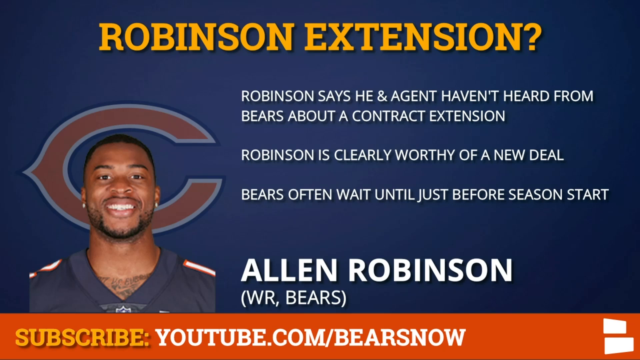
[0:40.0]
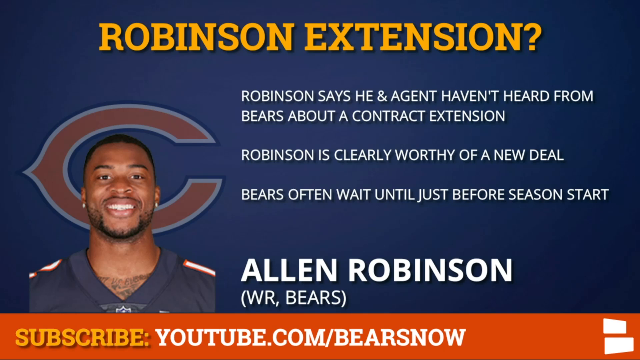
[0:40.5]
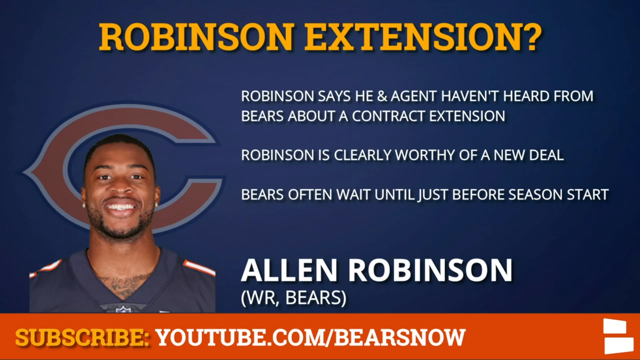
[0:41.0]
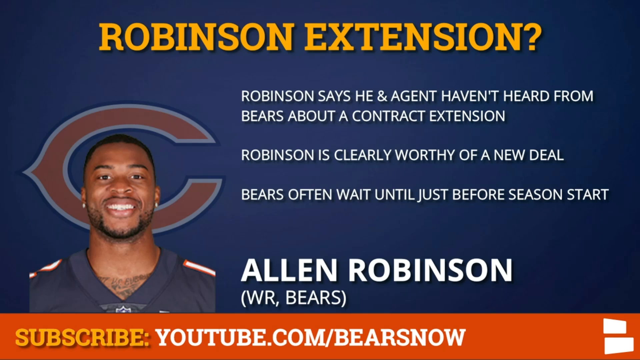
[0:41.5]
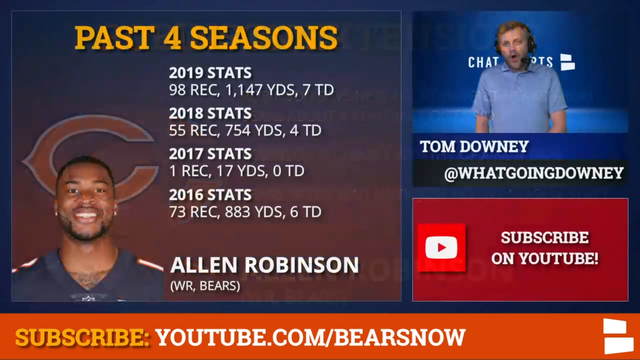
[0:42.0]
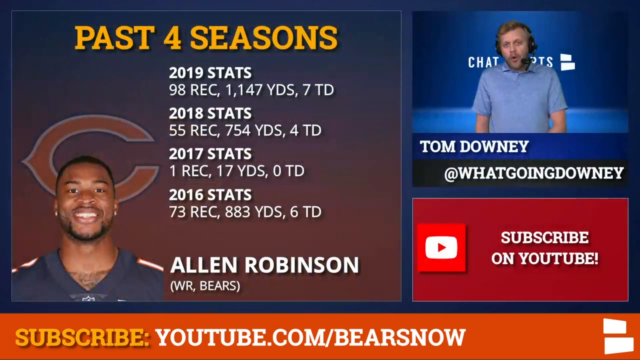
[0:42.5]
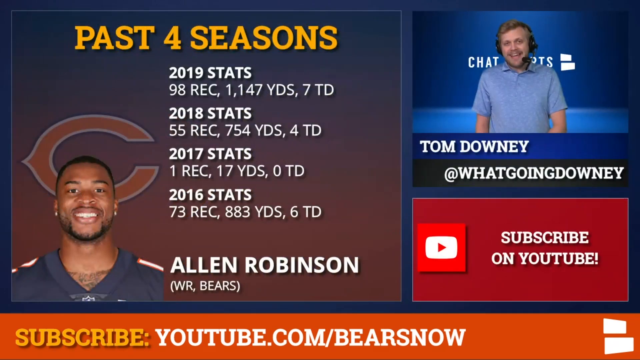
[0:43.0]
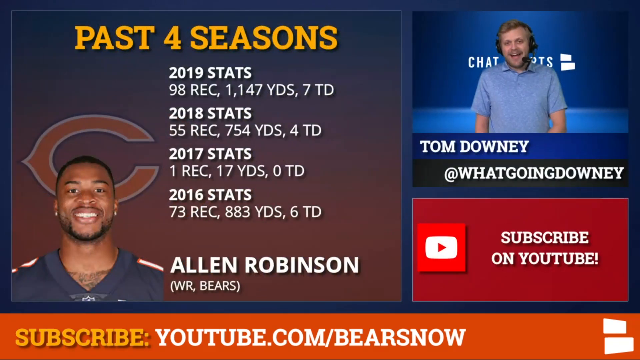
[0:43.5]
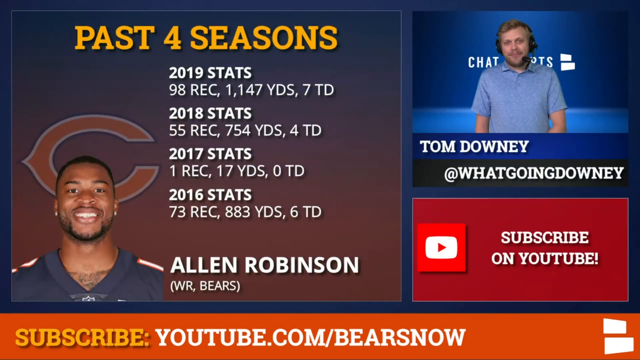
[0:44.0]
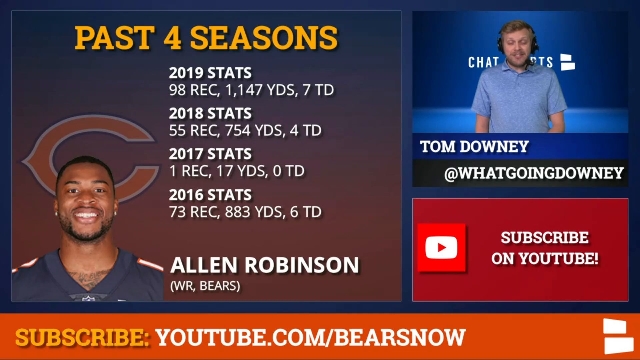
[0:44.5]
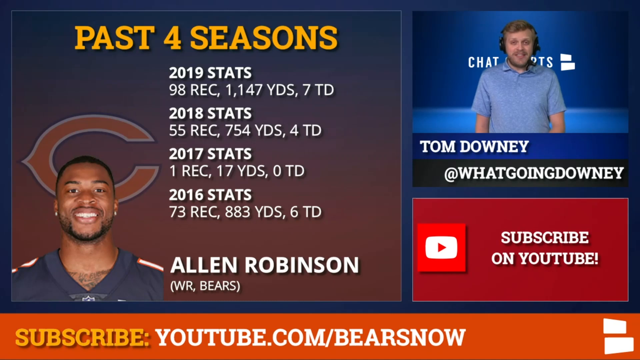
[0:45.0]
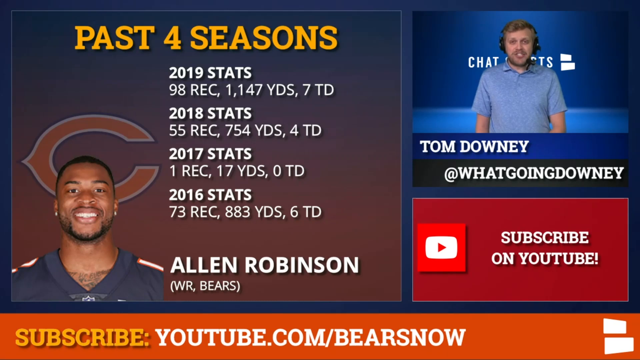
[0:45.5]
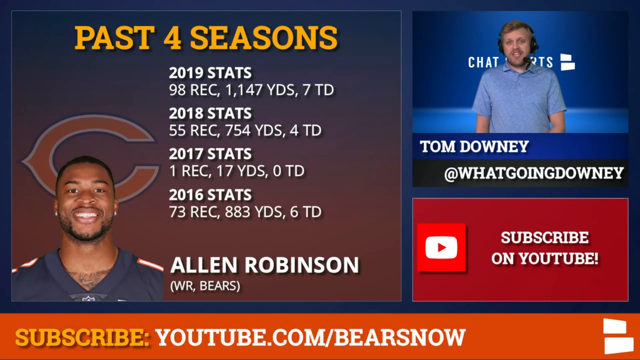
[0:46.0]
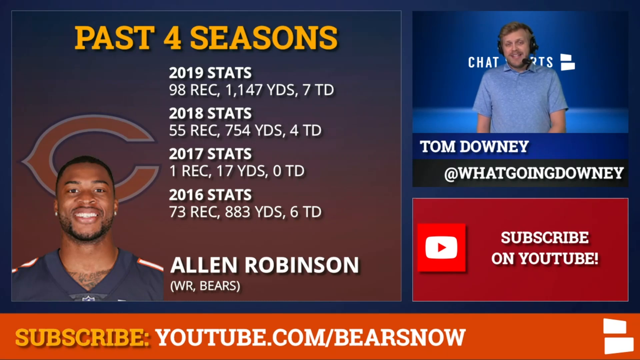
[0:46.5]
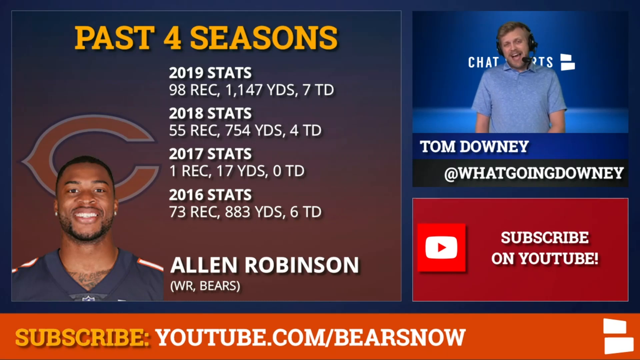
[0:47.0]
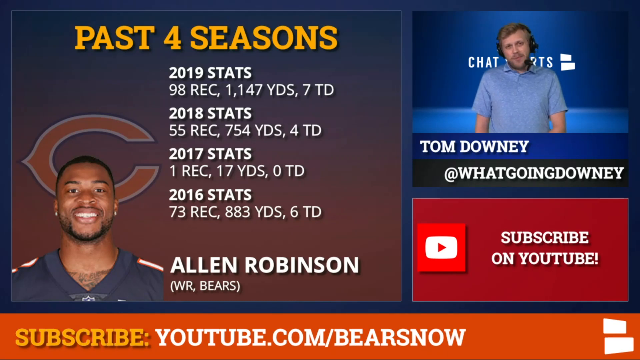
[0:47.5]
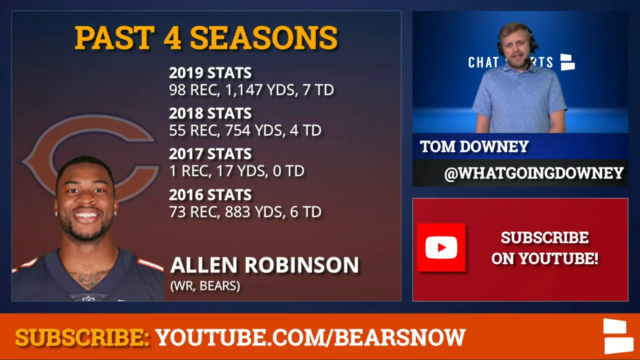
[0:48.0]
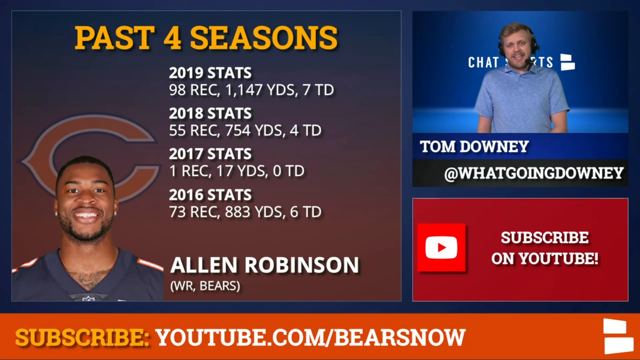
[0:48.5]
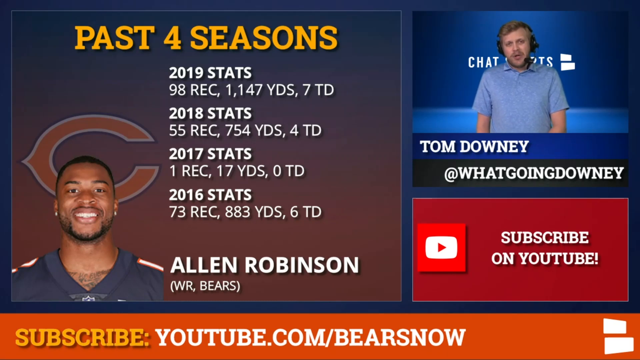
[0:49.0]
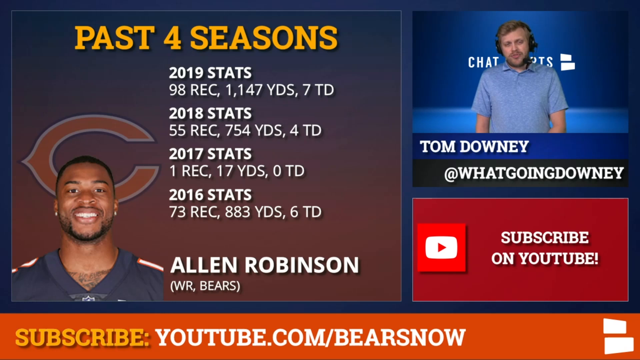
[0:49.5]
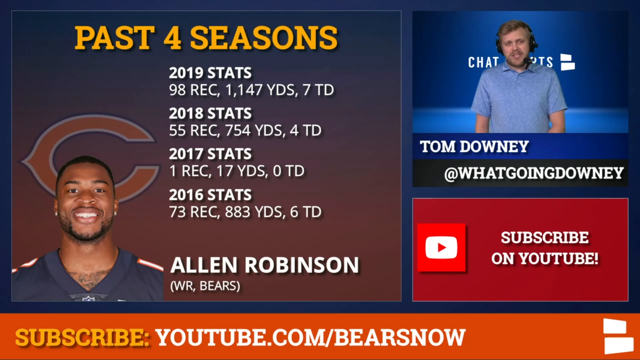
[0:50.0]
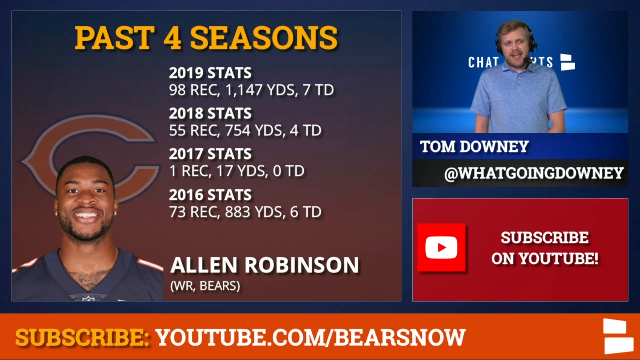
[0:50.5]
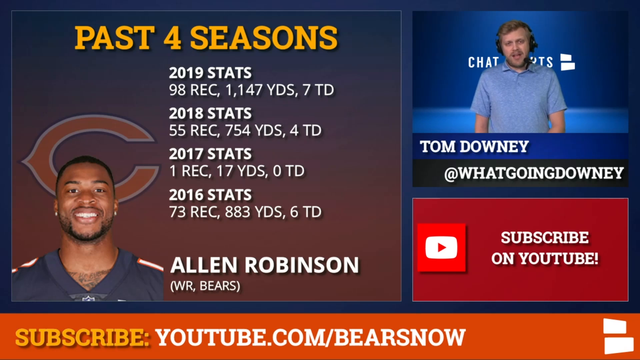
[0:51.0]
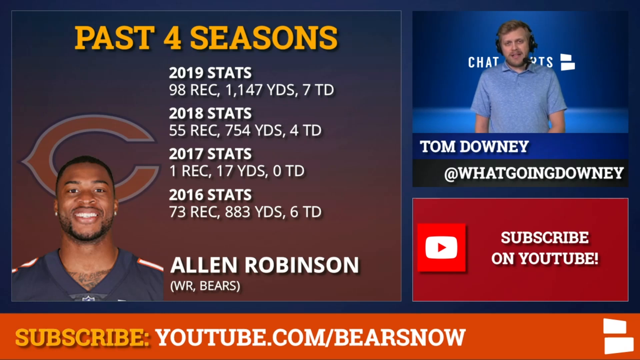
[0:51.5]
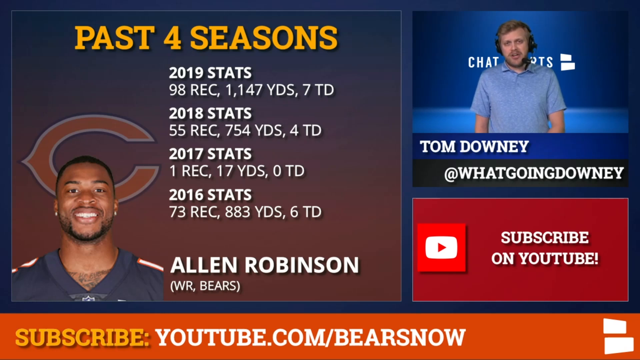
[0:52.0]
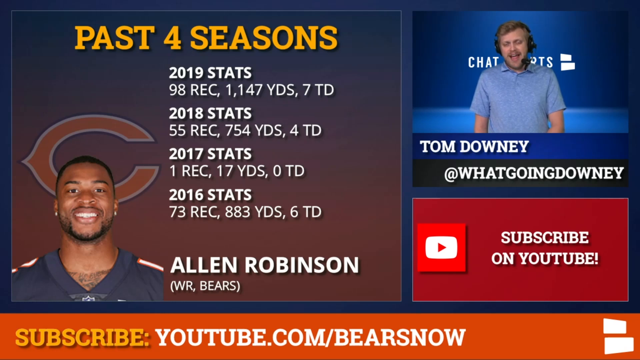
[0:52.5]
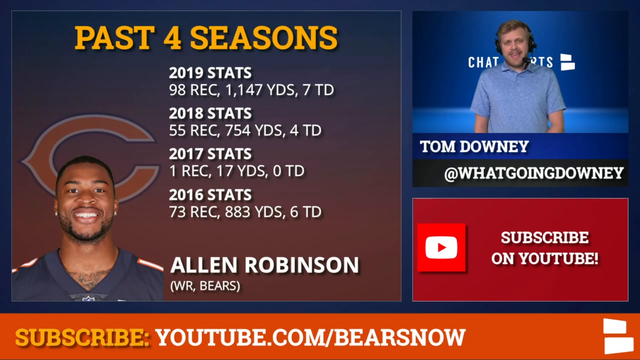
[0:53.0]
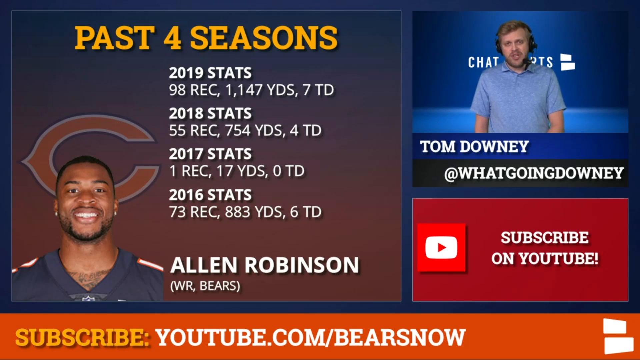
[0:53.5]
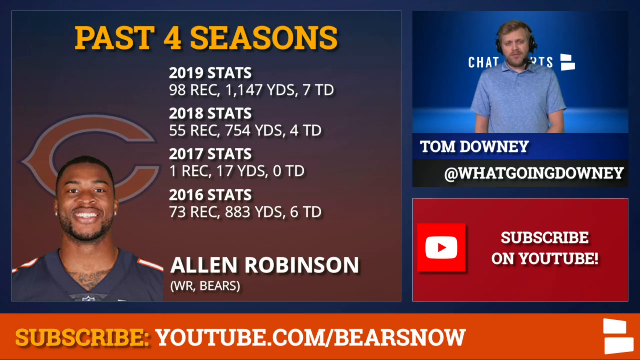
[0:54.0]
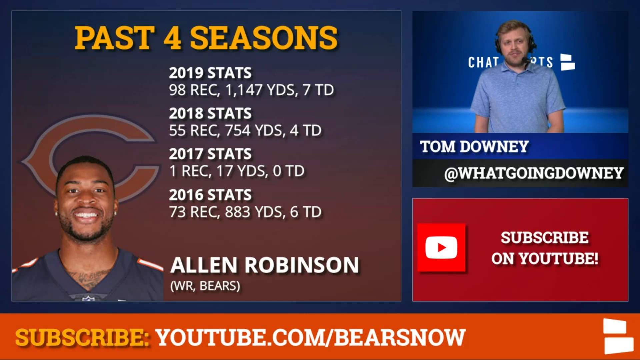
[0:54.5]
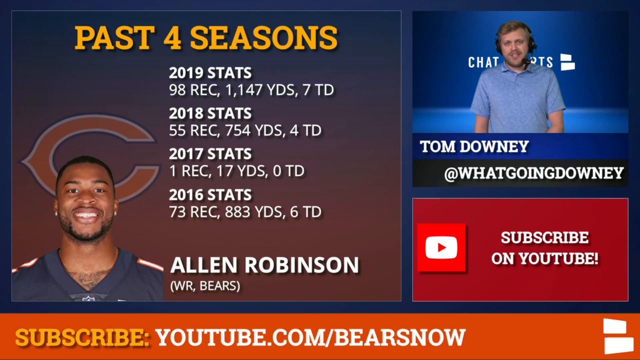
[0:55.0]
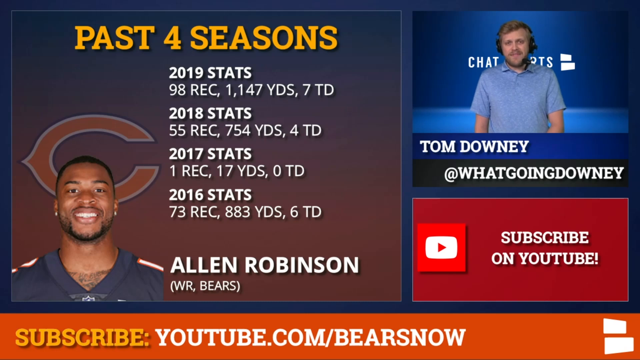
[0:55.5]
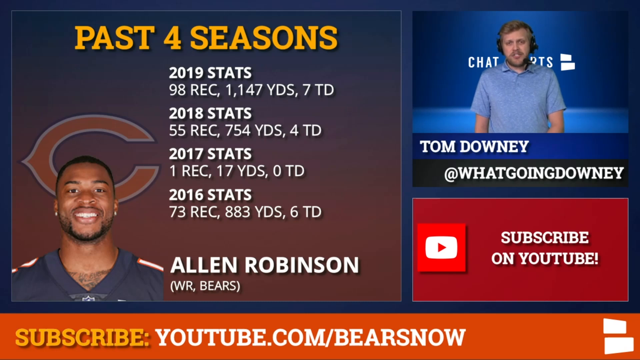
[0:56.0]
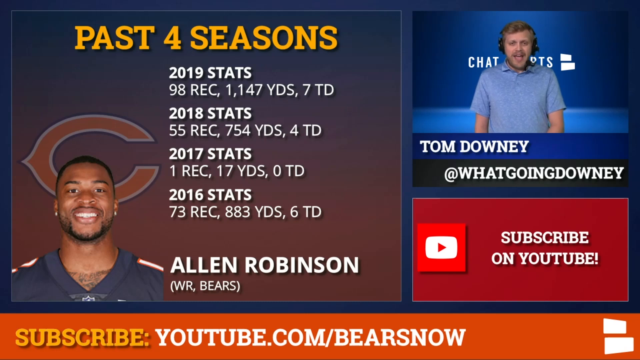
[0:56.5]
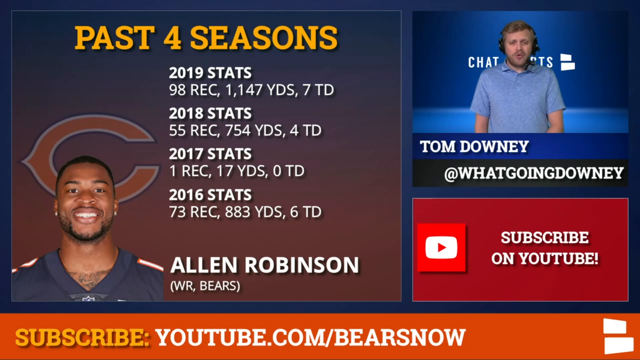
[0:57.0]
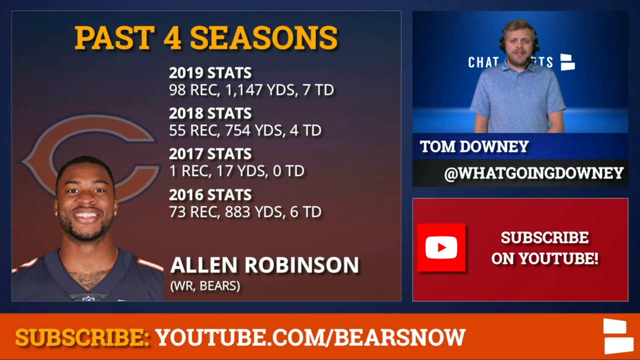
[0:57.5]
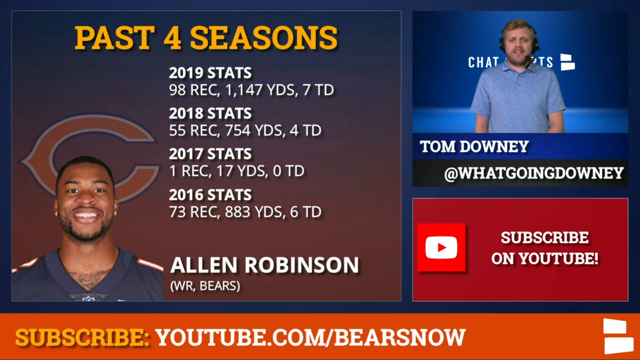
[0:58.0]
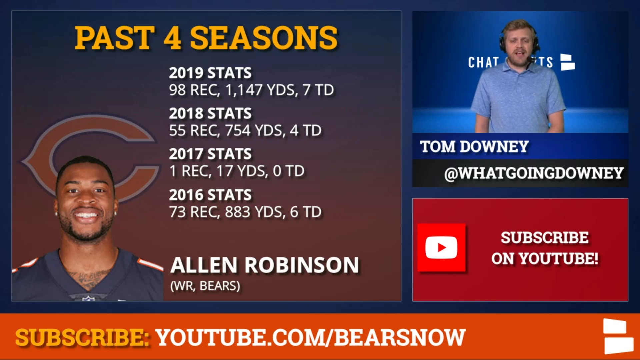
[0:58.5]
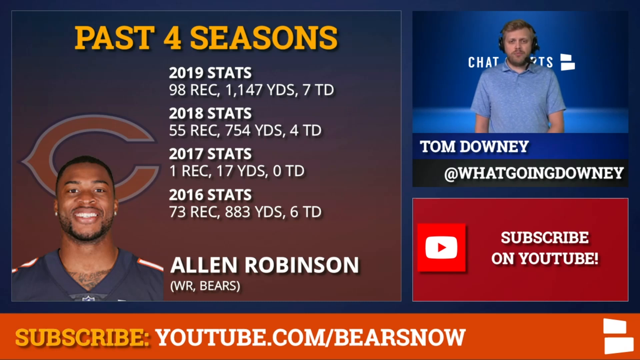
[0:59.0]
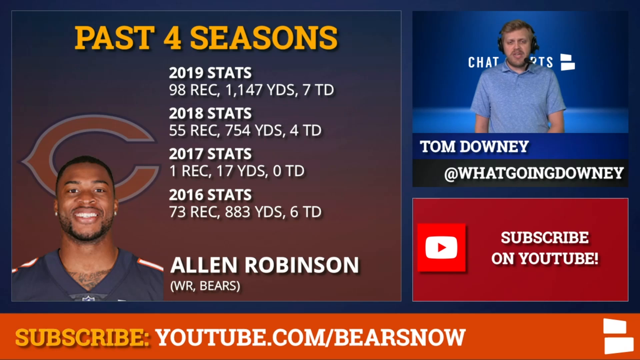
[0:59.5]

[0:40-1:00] A page reads "Robinson extension" and shows a picture of the player Alan Robinson, smiling with his chin up and a big C behind him. He wears a Chicago Bears jersey and two earrings. The page shows his stats for the past four seasons, 2016, 2017, 2018 and 2019, and under his name it reads "WR, (bears)". In the upper portion of the screen is a man named Tom Downey, whose tag reads "at what going Downey". He wears a headset with a microphone that goes over his left cheek and talks into it. Underneath him is a red subscribe button reading "Subscribe on Youtube!", and along the bottom of the whole screen it reads "Subscribe: Youtube.com/bearshow".